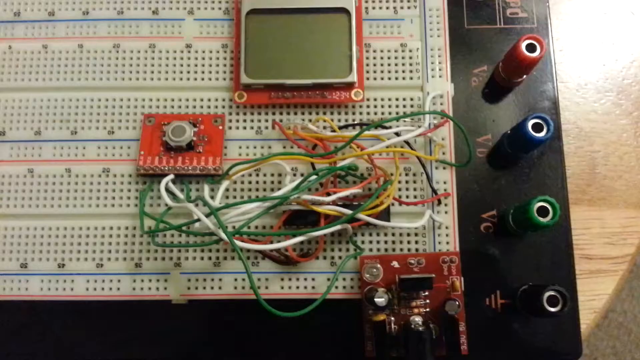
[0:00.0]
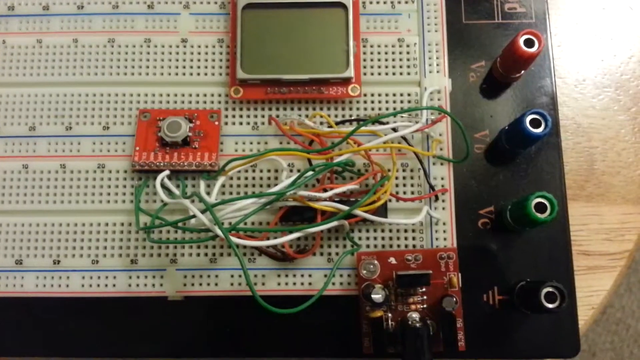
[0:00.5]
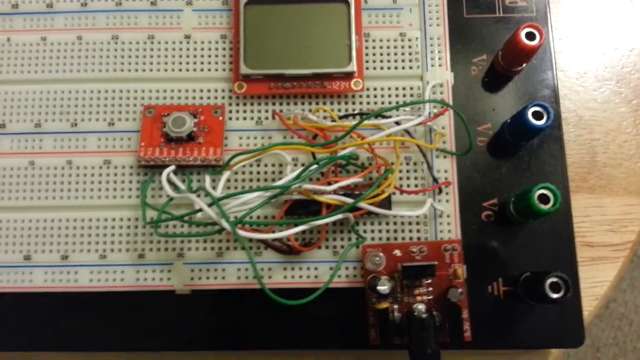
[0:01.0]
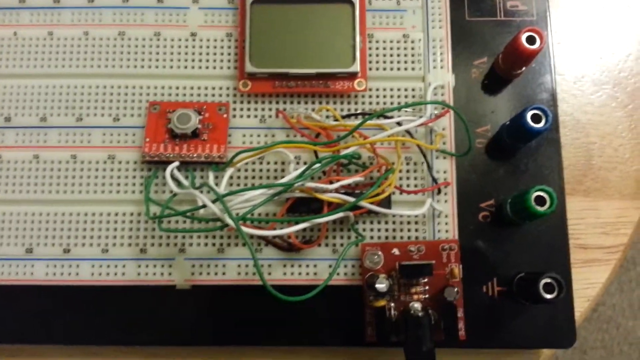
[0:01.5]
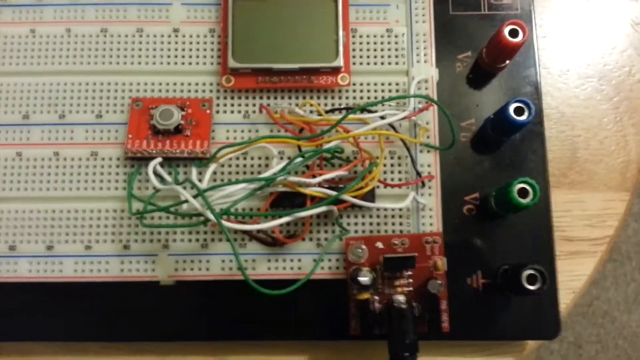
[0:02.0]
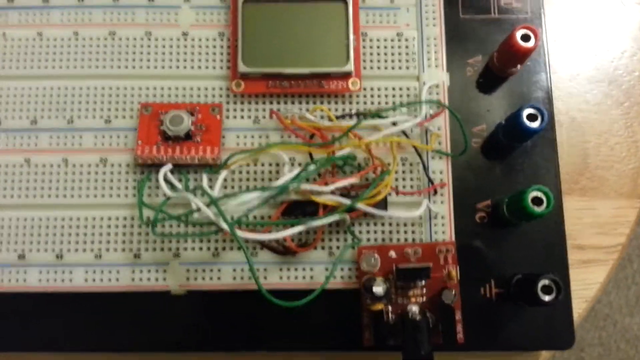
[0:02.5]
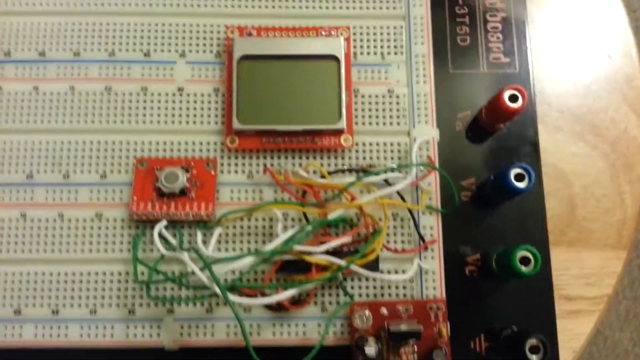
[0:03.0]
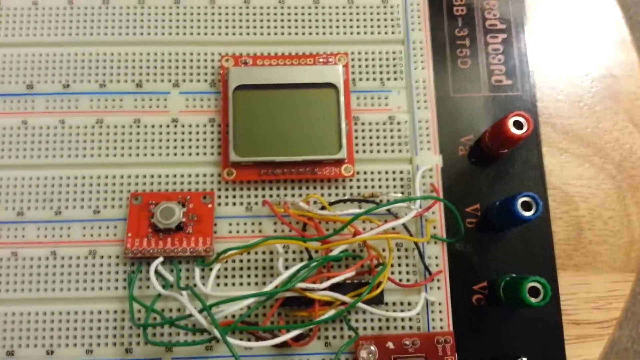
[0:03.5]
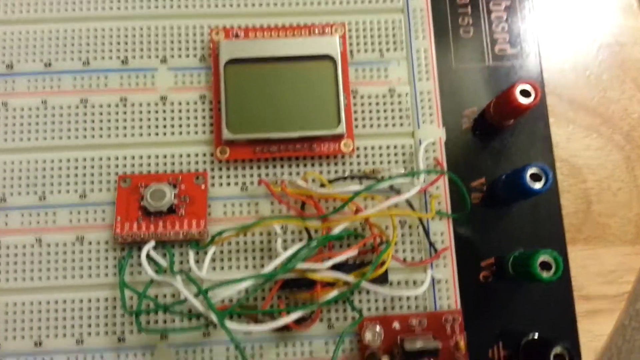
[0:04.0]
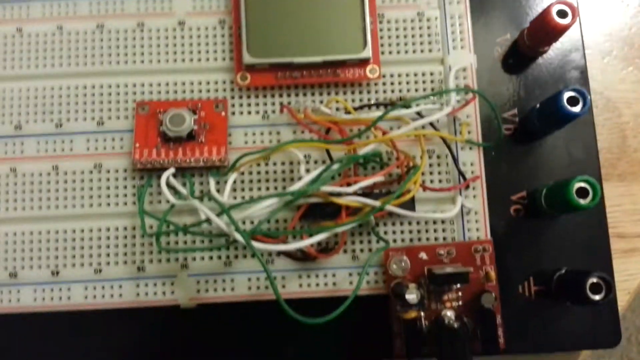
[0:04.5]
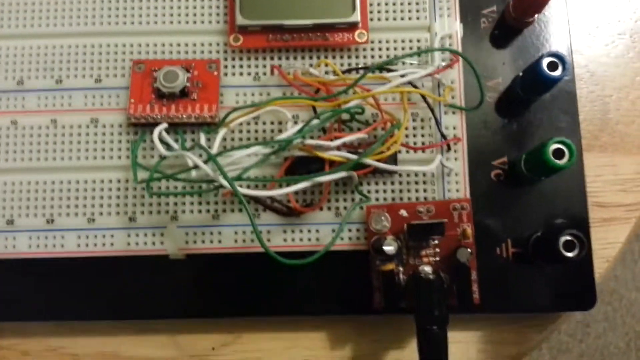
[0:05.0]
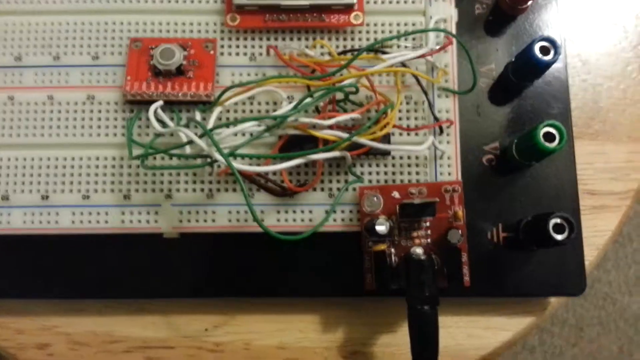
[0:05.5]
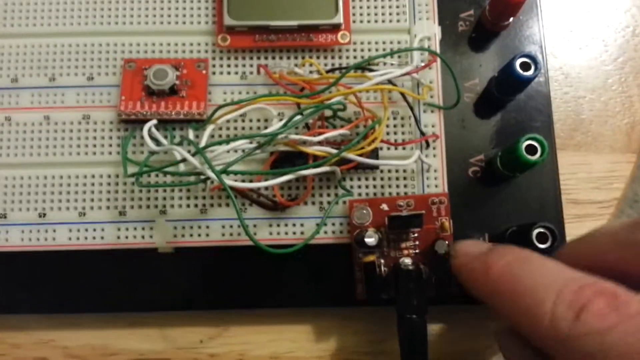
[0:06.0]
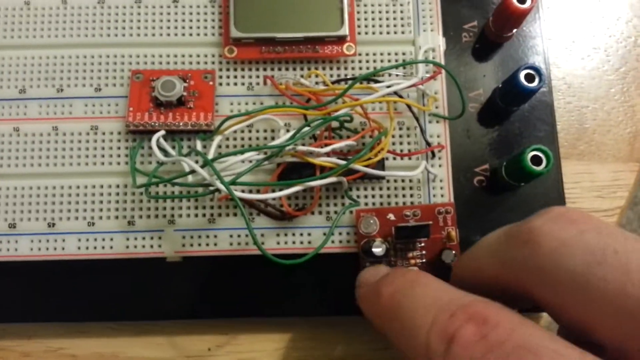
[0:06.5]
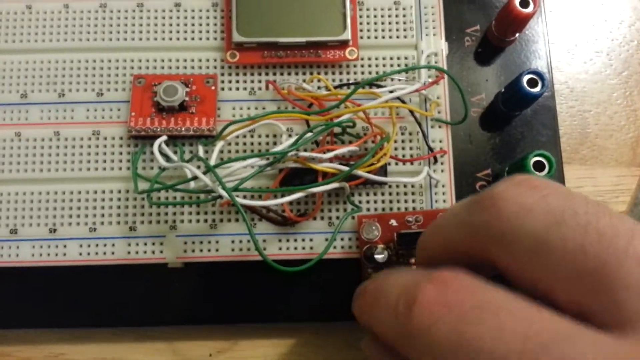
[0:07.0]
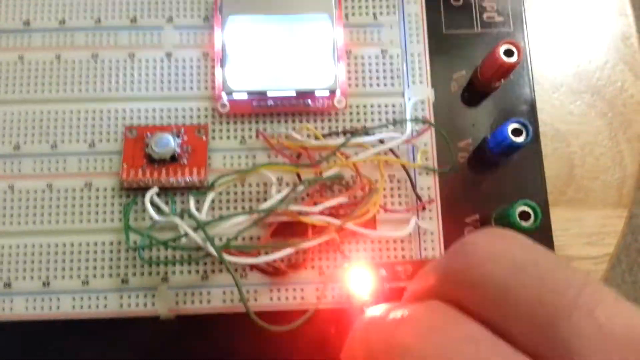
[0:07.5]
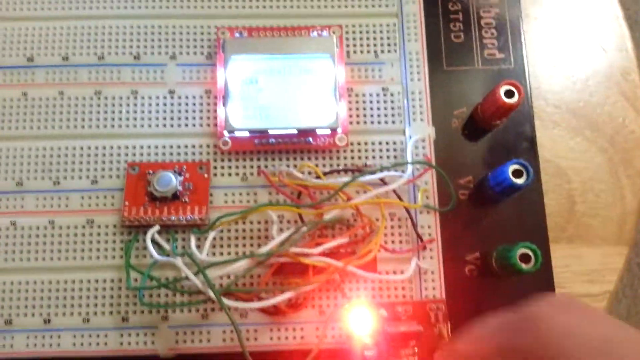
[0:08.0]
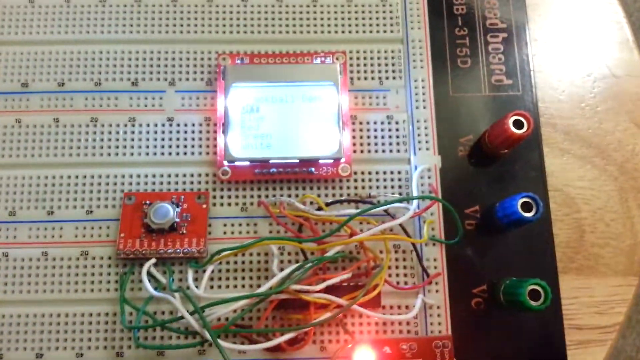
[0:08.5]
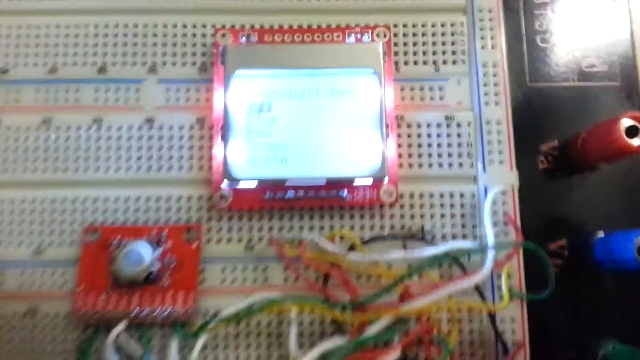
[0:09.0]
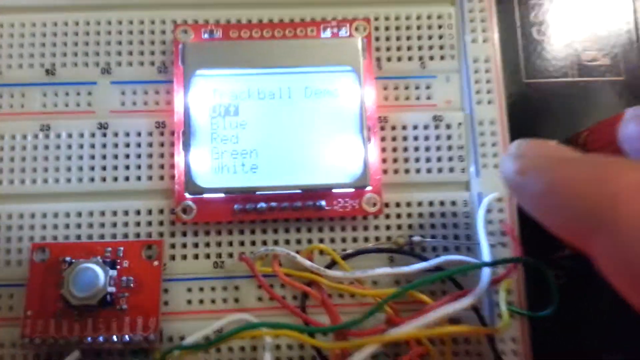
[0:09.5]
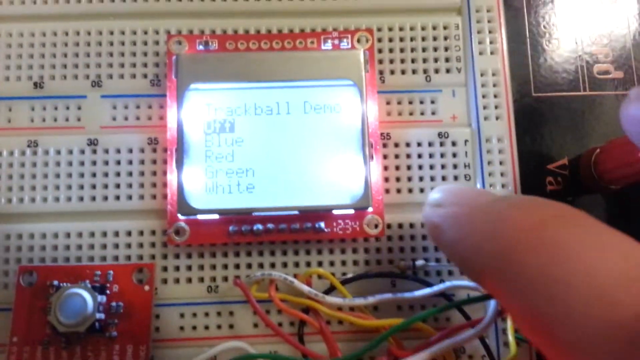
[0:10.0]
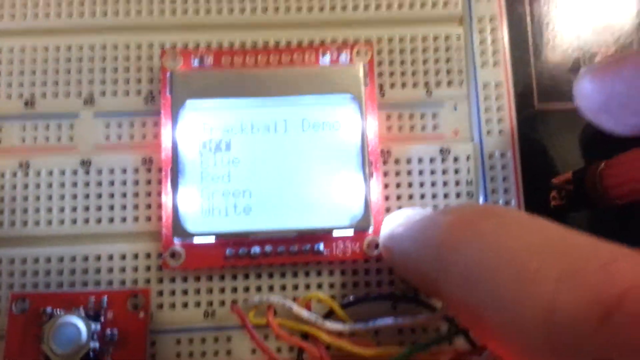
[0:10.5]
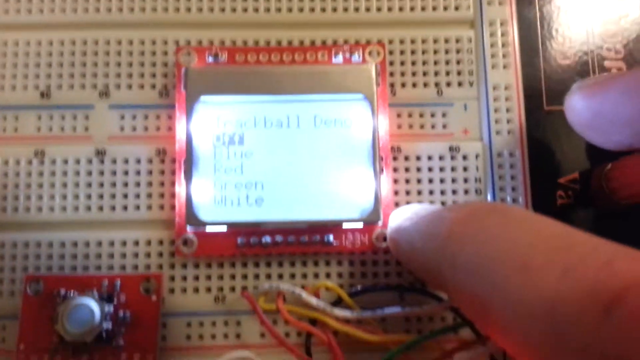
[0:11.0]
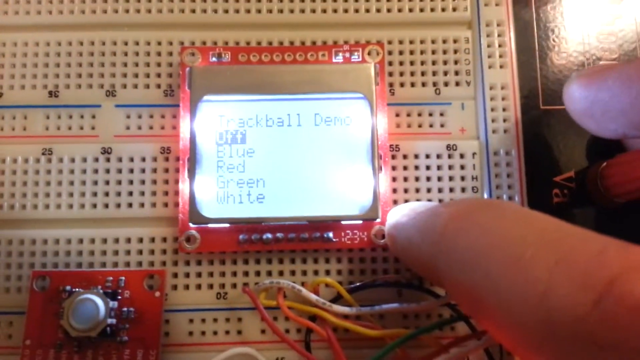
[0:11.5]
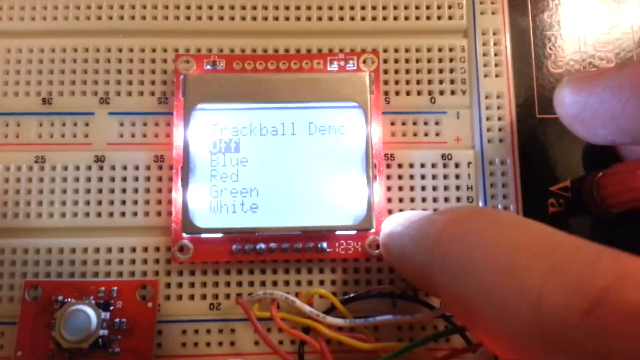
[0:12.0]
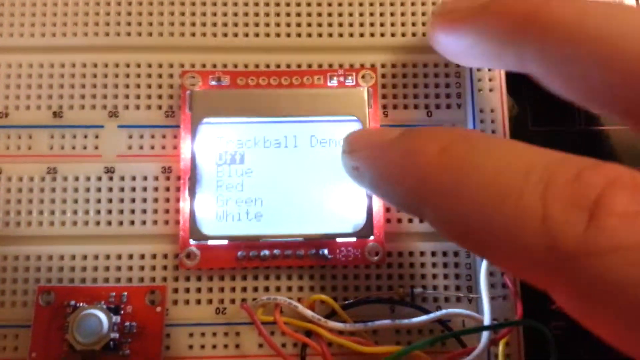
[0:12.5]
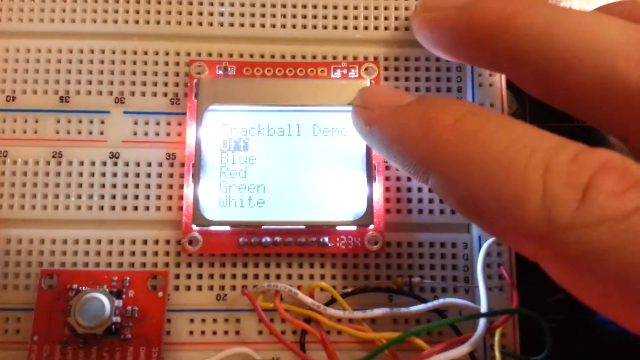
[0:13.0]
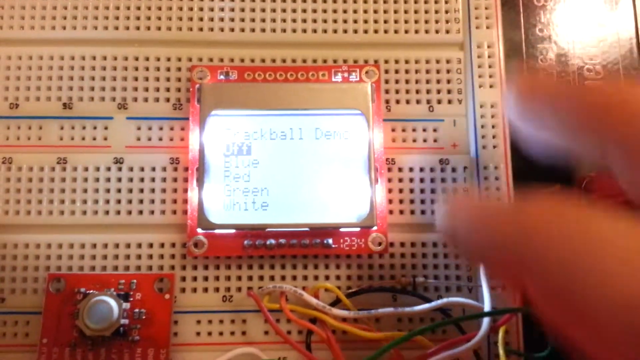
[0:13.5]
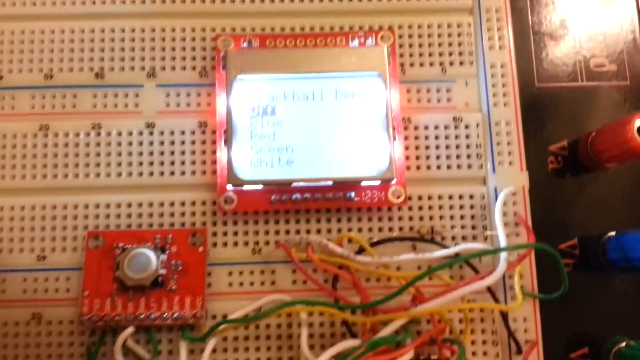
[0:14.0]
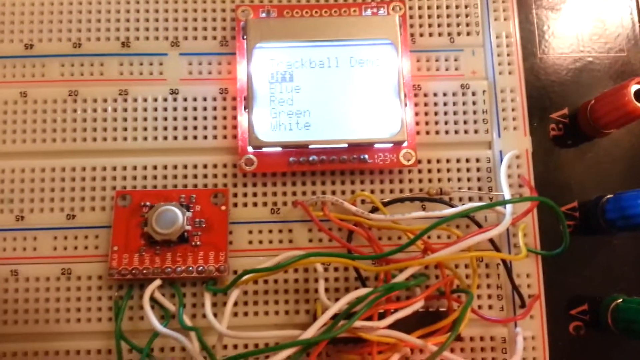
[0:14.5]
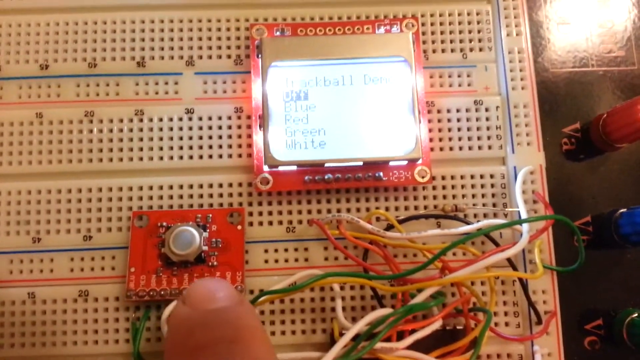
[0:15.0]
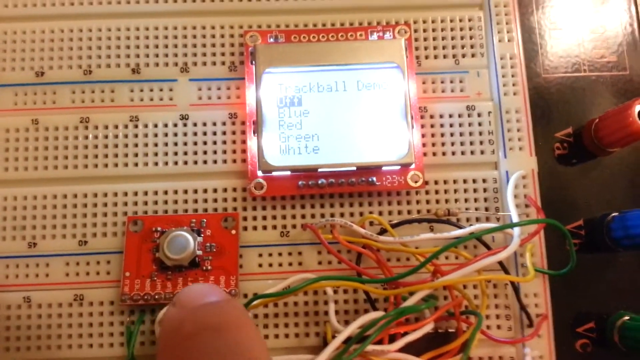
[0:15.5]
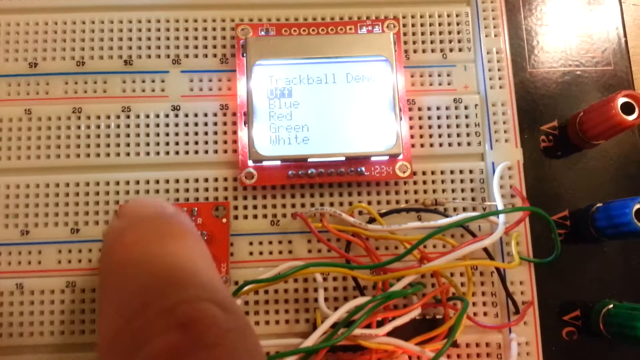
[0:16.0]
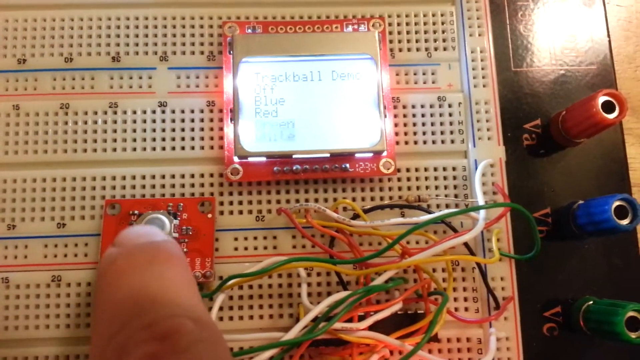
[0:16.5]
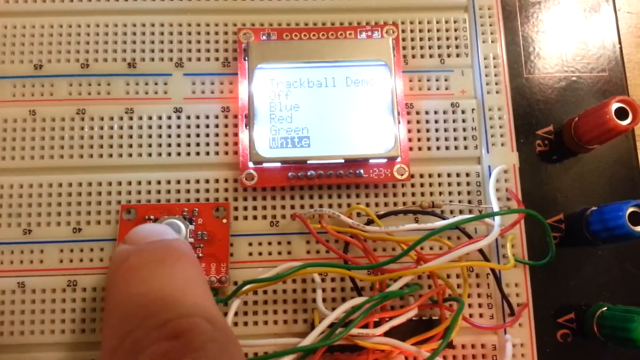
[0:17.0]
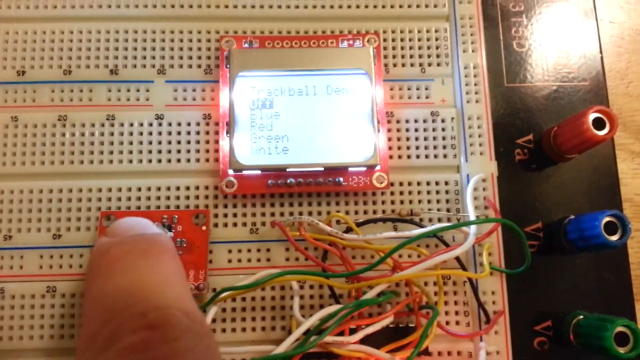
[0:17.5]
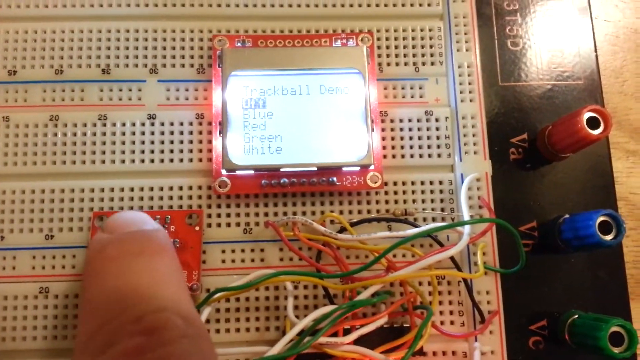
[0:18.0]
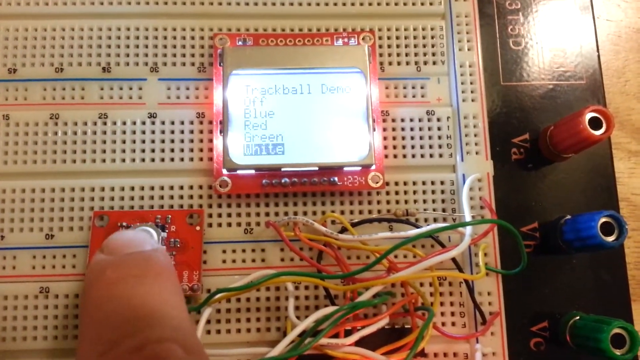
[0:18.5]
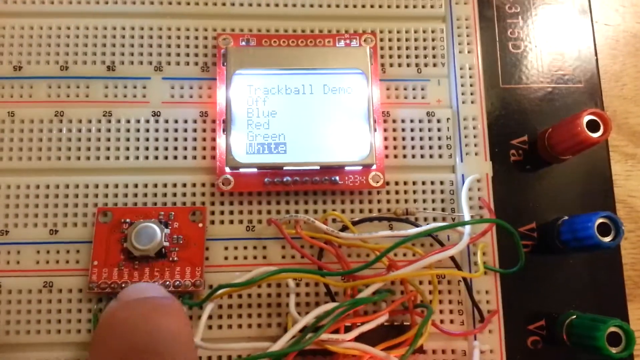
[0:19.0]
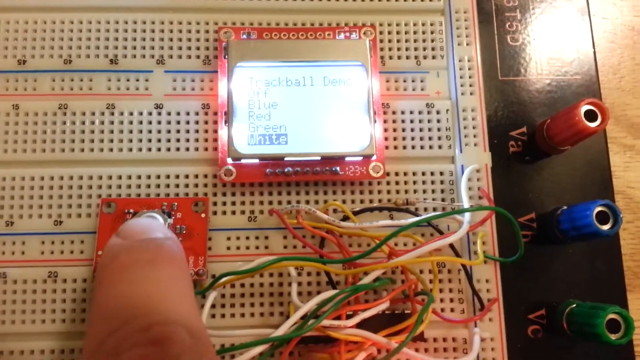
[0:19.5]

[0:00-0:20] Some wires and a row of slots coloured red, blue, green and black are shown. A hand turns on a button on a square chip, which lights up a screen with text reading "school ball"; the text is not clearly visible because of the reflection of the phone and the bright screen. The wires are green, white, orange and reddish, and there are other red chips on the sides. There are numbers on the chip mat, and letters near the slots read "VA", "VB", "VC" and "VD". Another text beside the slots is hard to identify because a flashlight is shining on it.